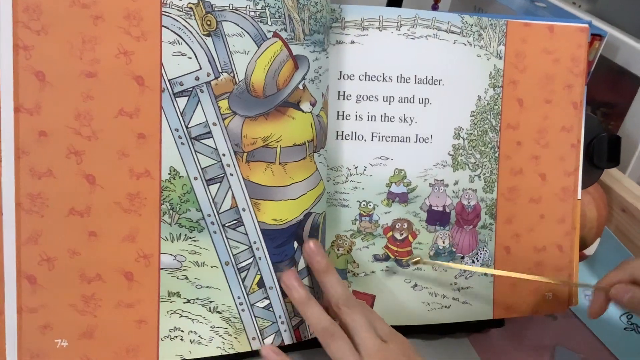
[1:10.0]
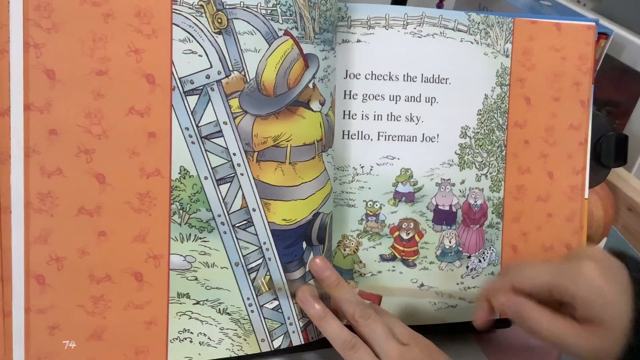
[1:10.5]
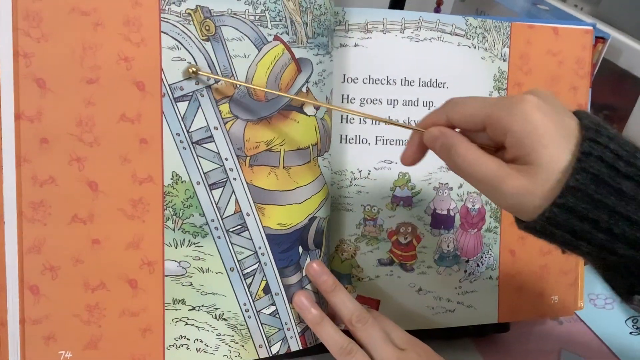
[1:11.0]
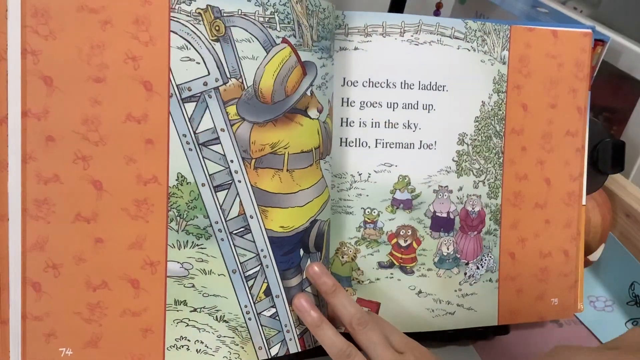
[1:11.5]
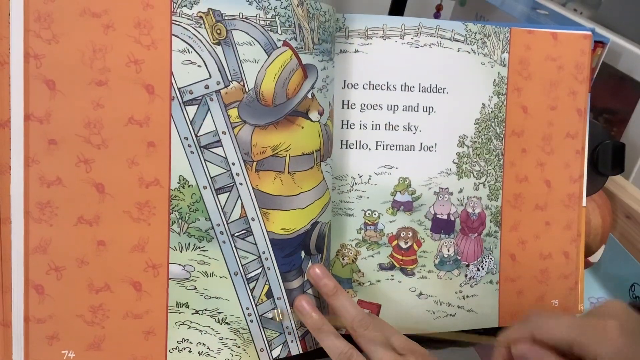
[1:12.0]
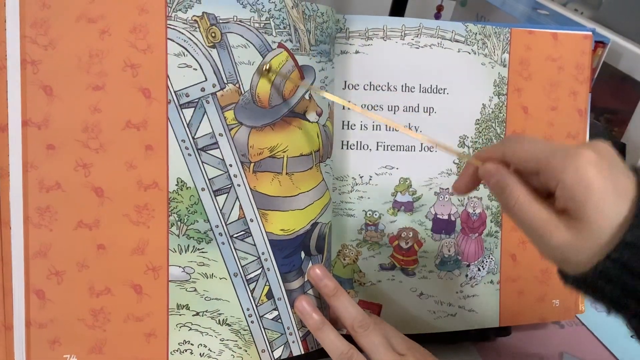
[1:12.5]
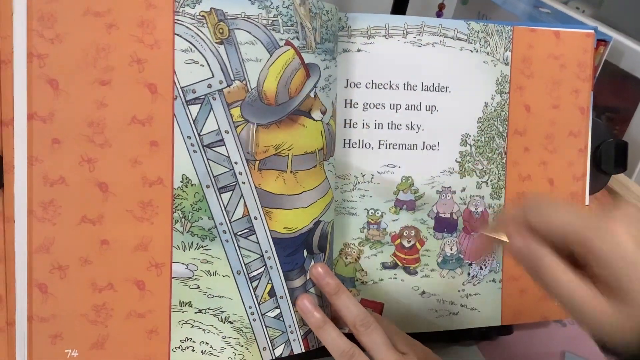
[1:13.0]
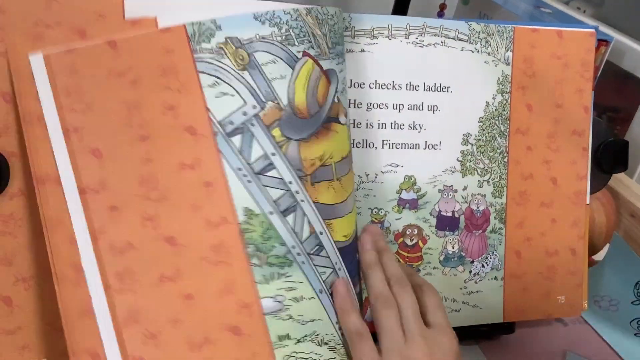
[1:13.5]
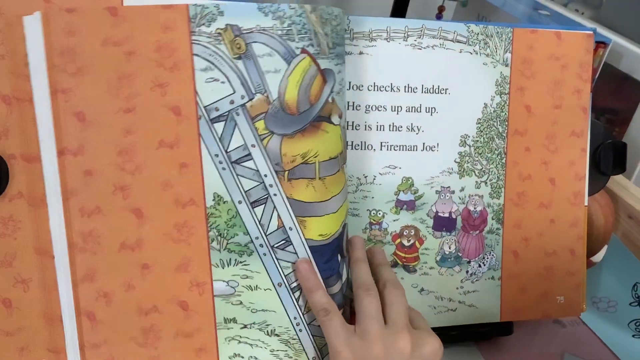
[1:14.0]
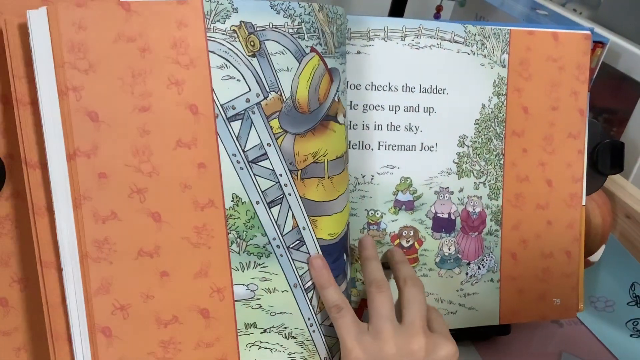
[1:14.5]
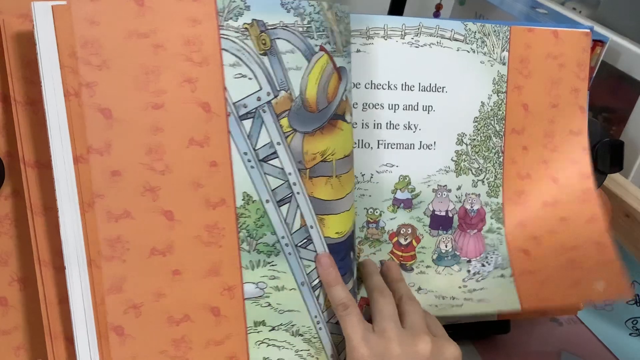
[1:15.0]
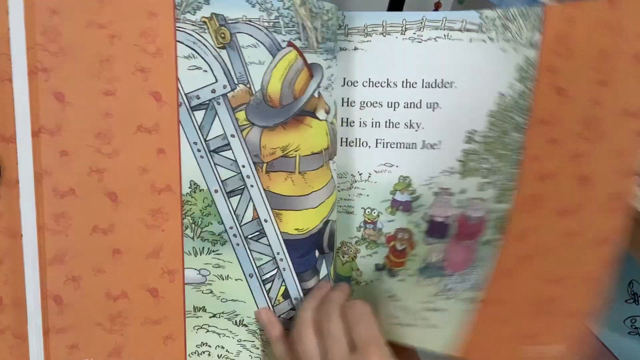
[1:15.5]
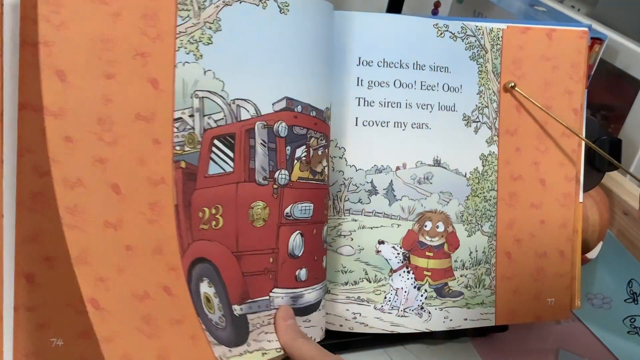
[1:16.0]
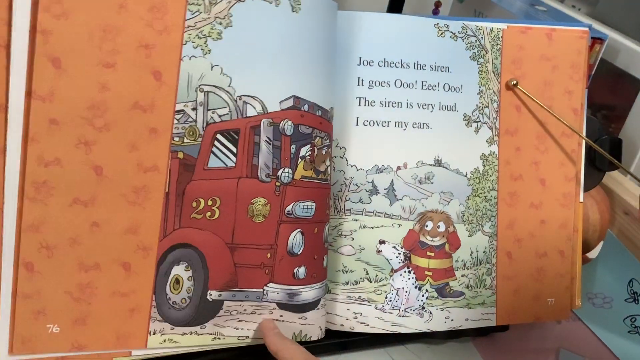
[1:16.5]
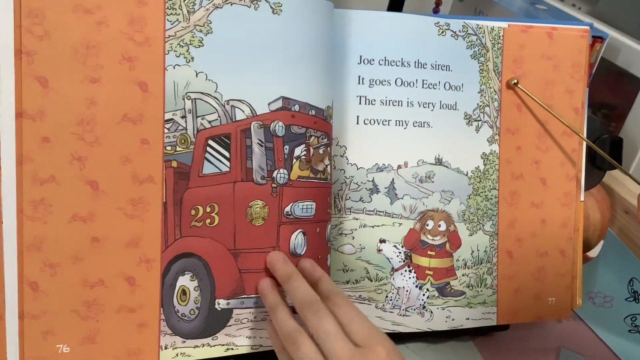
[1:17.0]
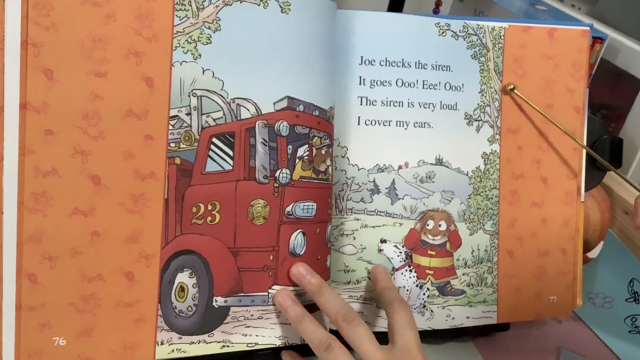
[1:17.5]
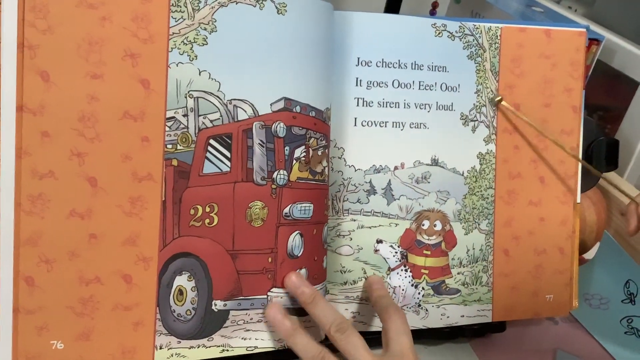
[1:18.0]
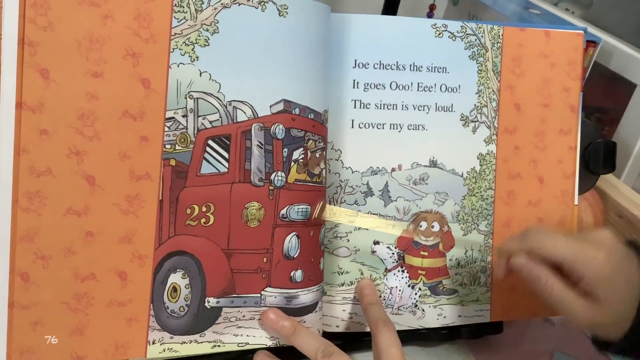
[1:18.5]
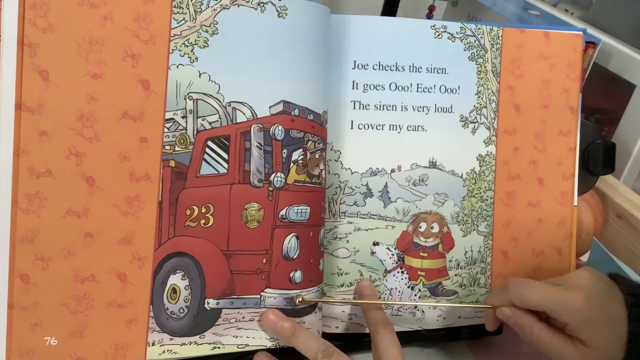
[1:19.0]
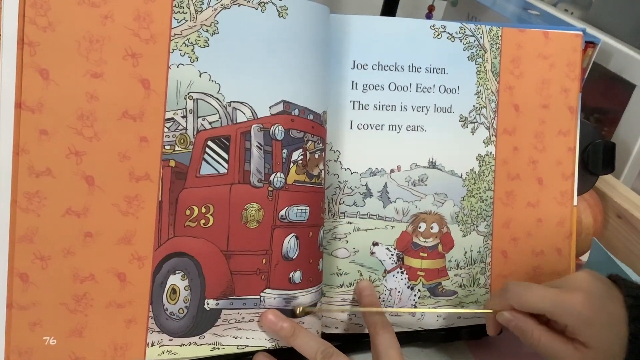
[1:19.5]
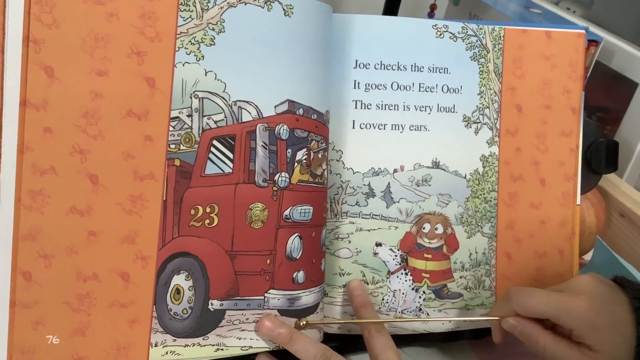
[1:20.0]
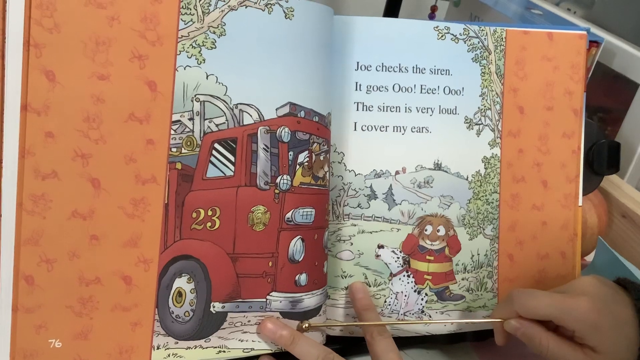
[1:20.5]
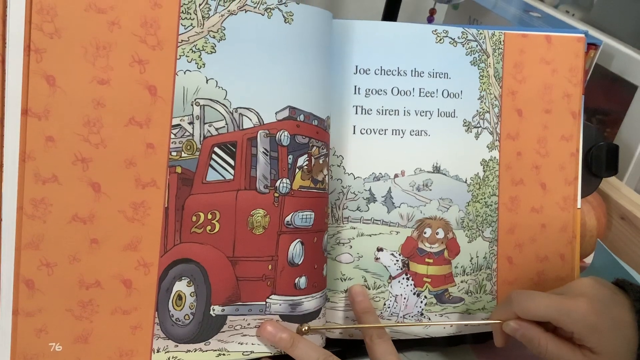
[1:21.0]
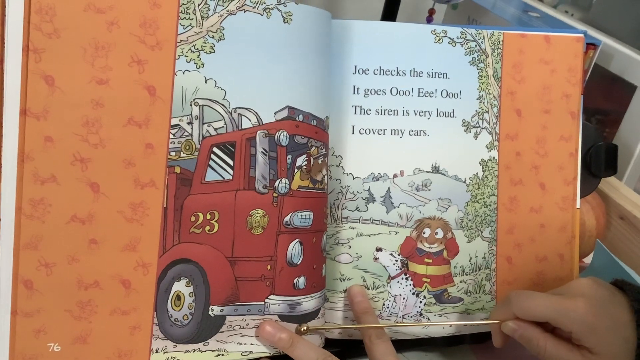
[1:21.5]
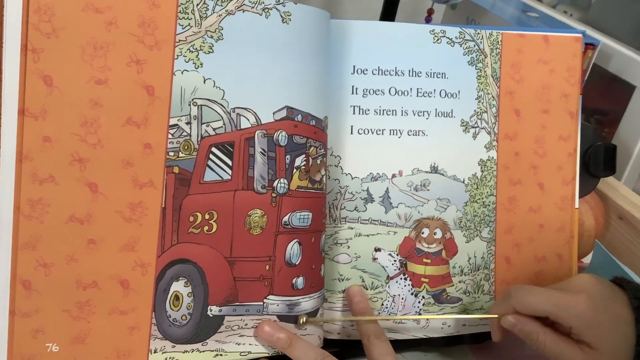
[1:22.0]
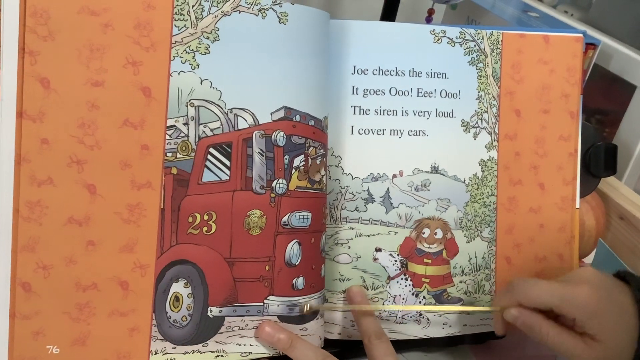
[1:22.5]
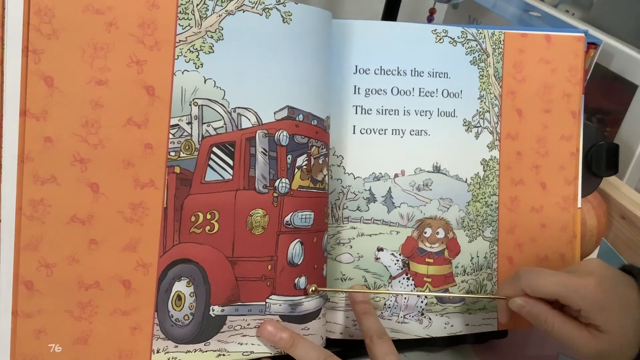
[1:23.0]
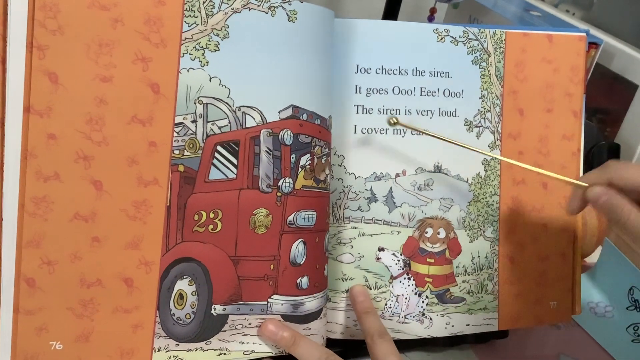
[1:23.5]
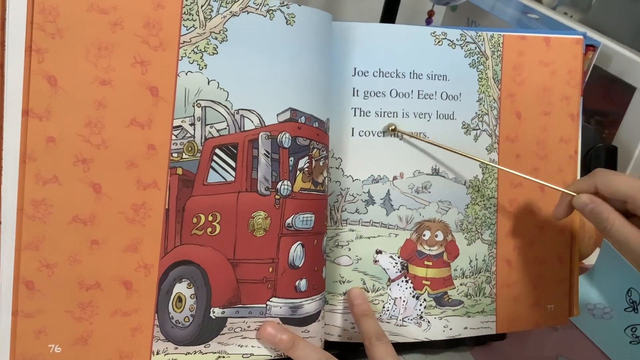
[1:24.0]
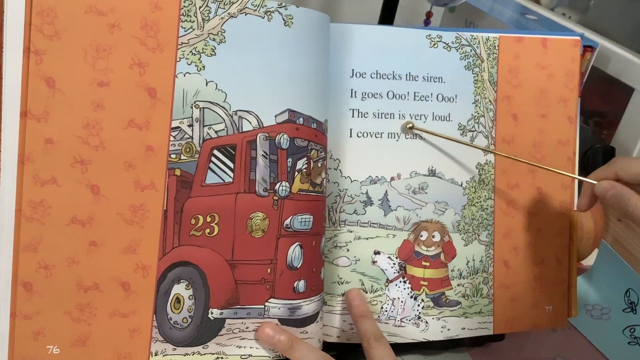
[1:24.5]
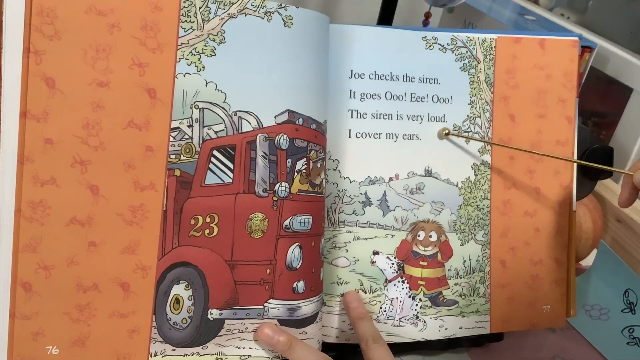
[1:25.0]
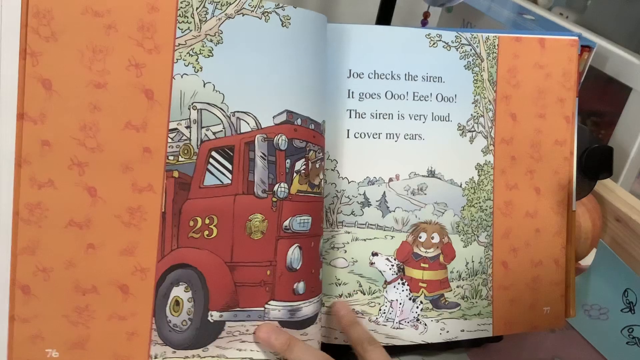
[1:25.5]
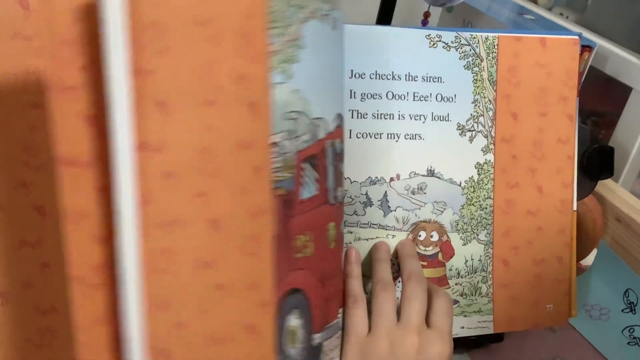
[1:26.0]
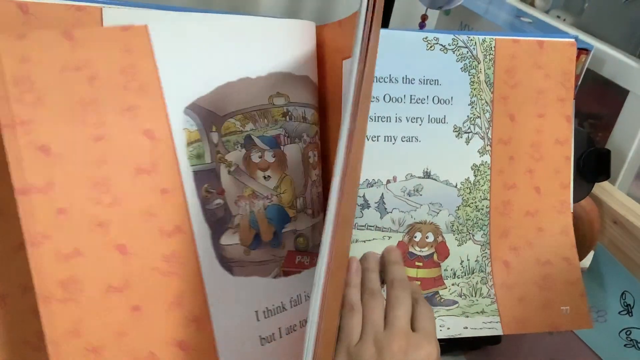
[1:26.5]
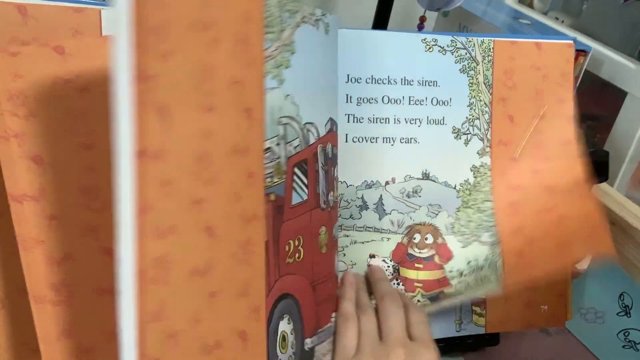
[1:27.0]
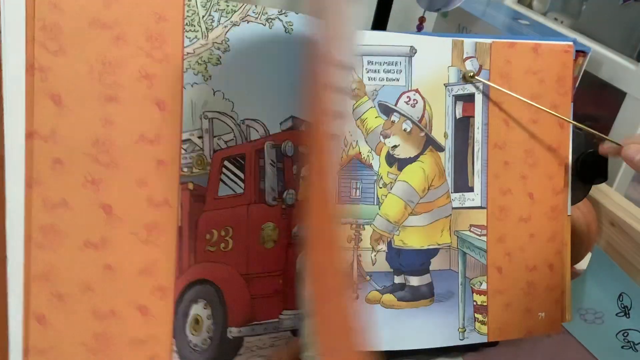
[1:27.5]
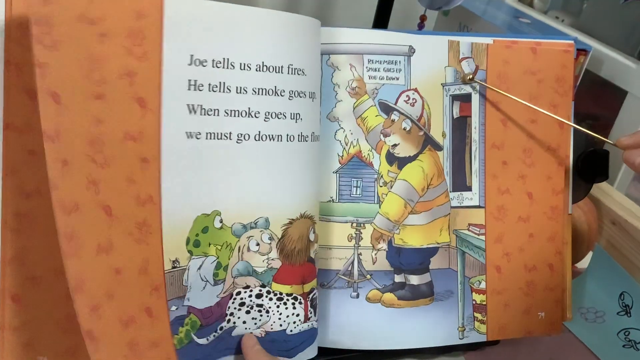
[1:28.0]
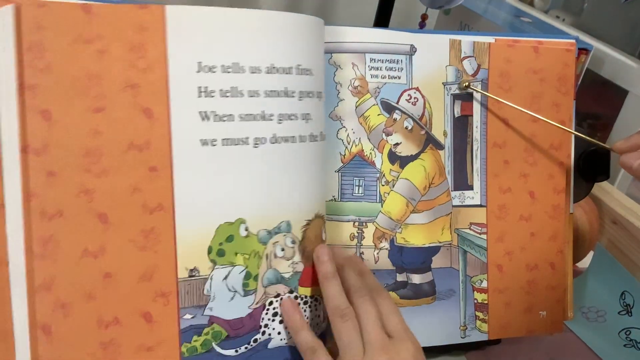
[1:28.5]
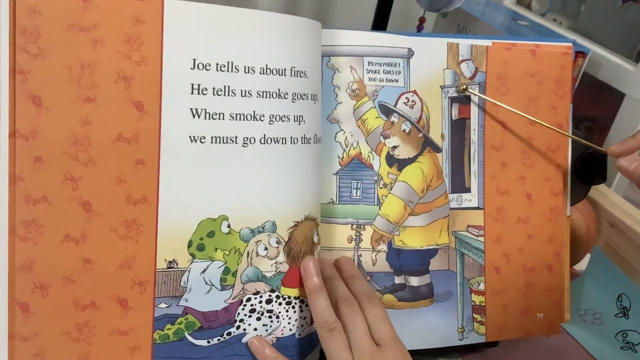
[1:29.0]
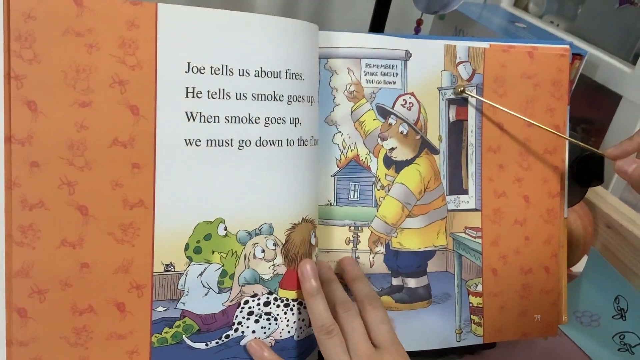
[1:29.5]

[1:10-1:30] The next page has eight characters: a fireman bear, a tiger child, a frog child, a crocodile child, a dog child, a hippo child, a rabbit child and a cat teacher. The fireman bear is up a ladder and they are all looking up at him from below. The setting is outside, and the text says, "Joe checks the ladder, he goes up and up, he is in the sky, hello fireman Joe." On the next page the setting is again outside, showing the fireman bear in his fire truck and the dog child outside it; there are only two people. The bear is testing the siren on the fire truck while the dog child covers its ears. The text reads, "Joe checks the siren, it goes ooo eee ooo, the siren is very loud, I cover my ears."